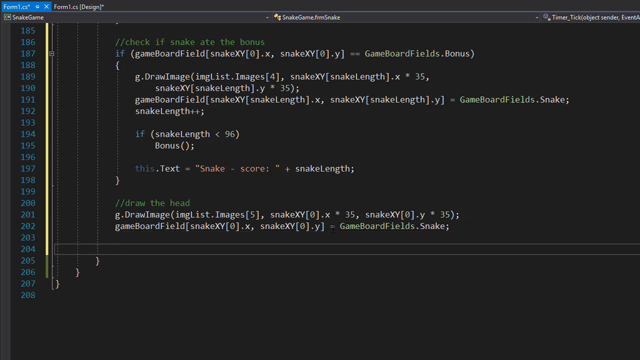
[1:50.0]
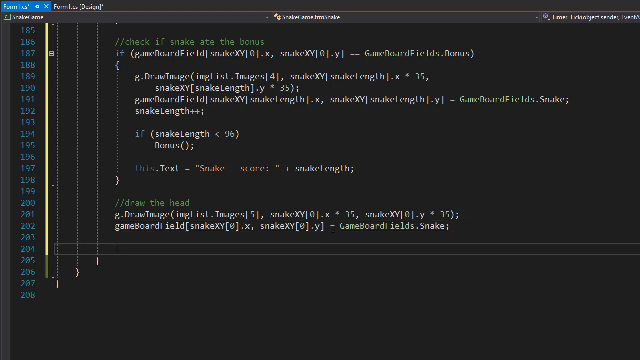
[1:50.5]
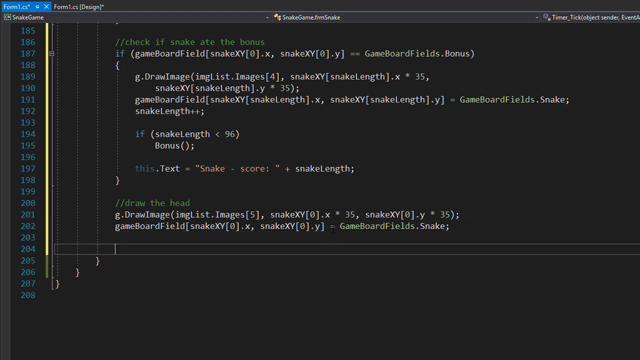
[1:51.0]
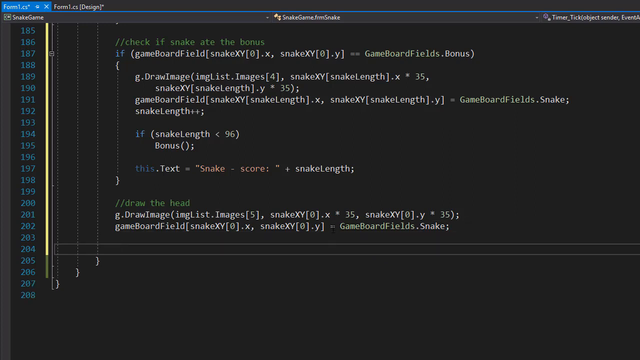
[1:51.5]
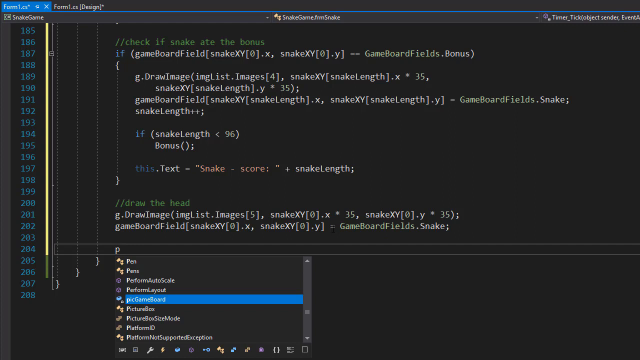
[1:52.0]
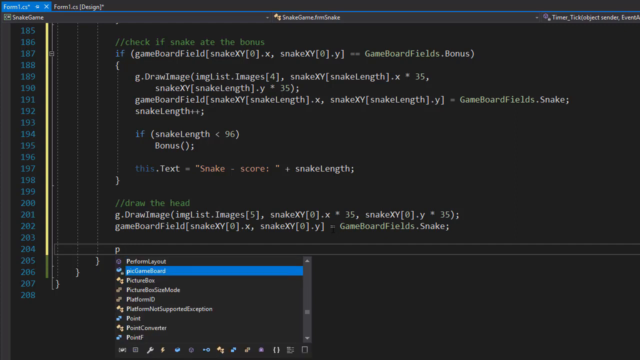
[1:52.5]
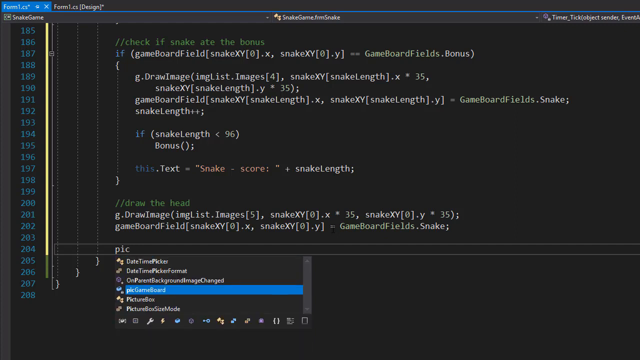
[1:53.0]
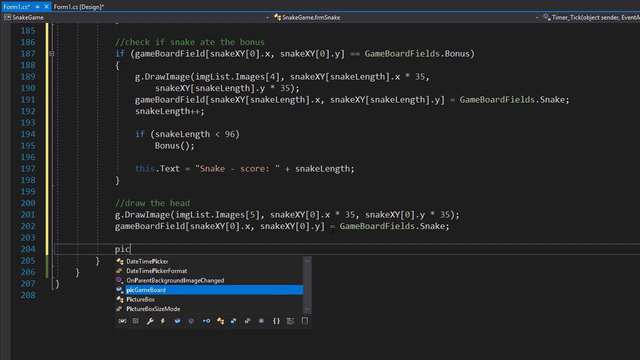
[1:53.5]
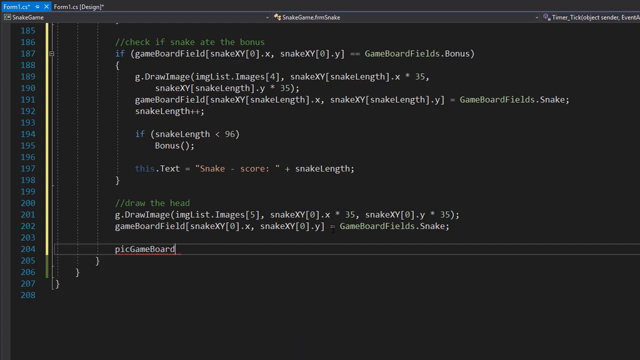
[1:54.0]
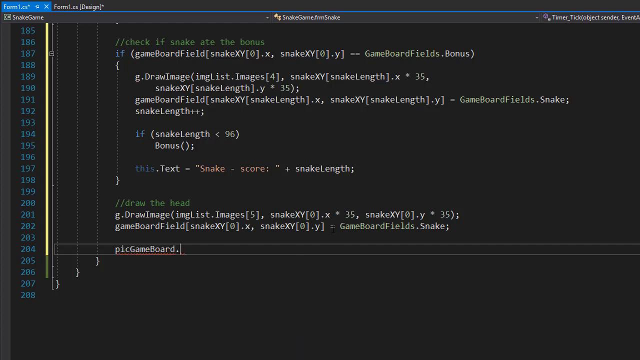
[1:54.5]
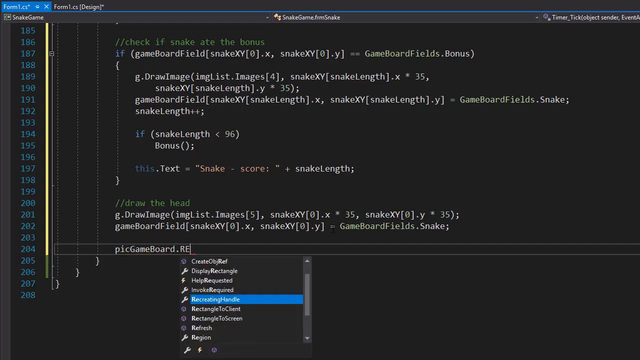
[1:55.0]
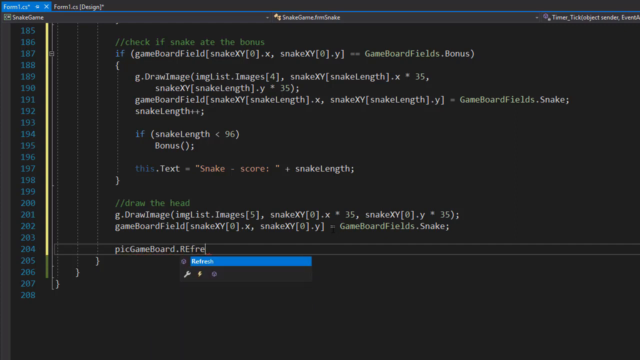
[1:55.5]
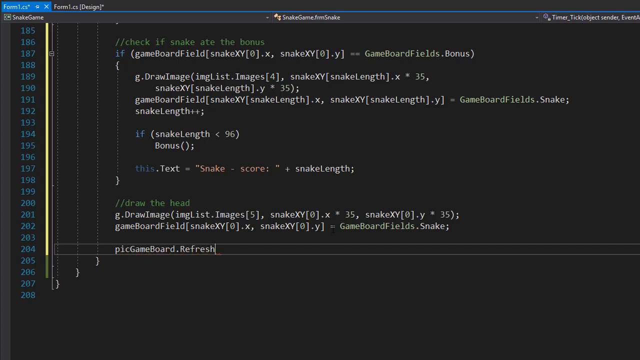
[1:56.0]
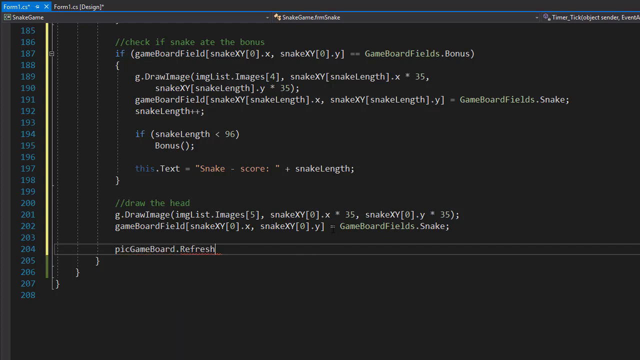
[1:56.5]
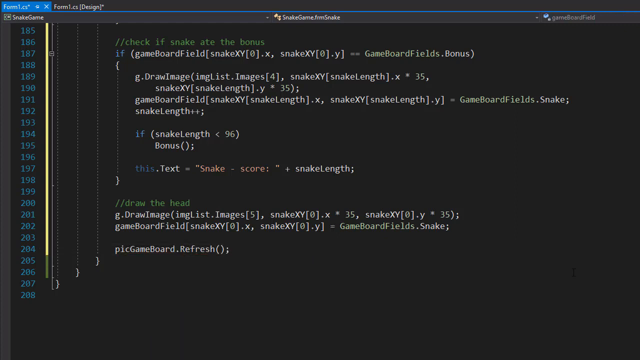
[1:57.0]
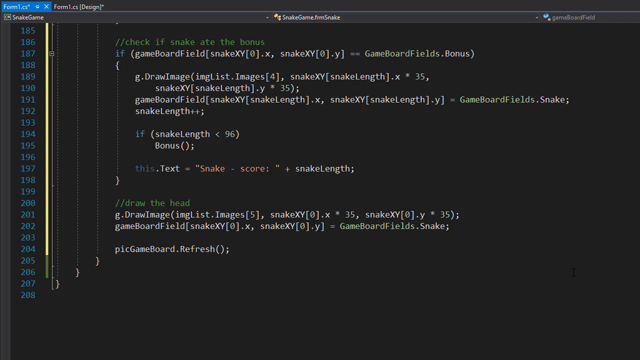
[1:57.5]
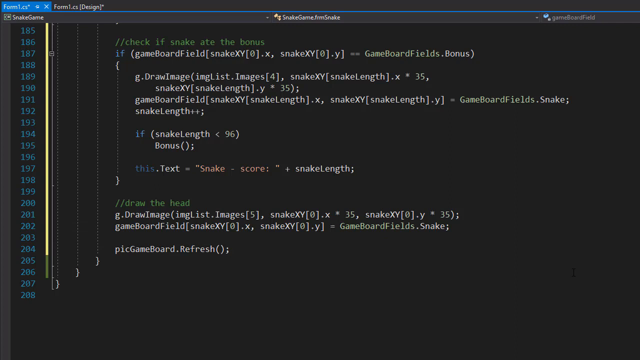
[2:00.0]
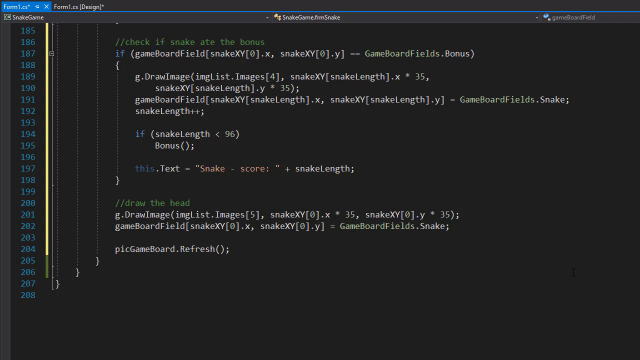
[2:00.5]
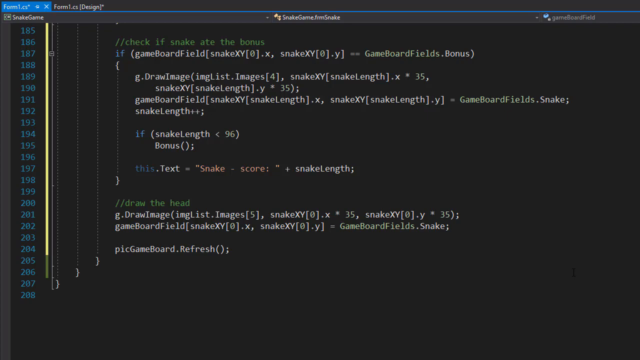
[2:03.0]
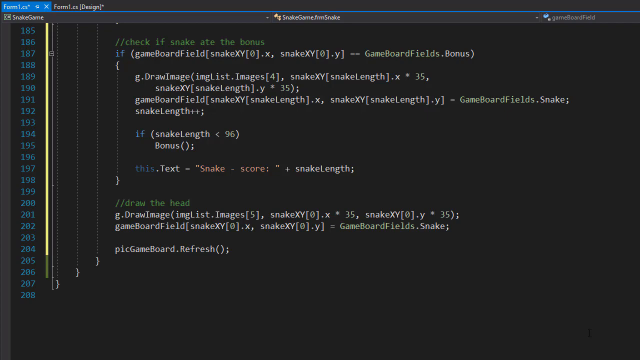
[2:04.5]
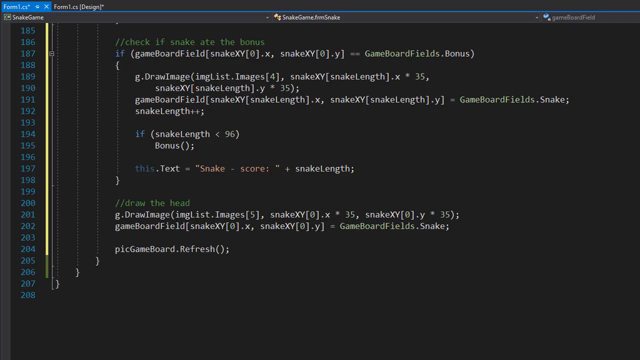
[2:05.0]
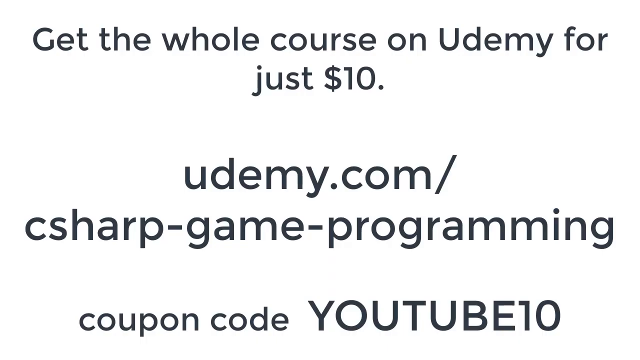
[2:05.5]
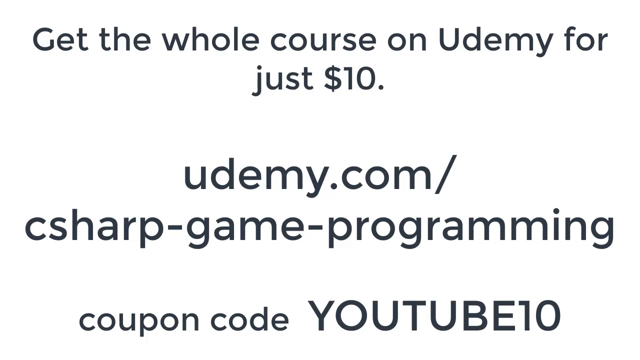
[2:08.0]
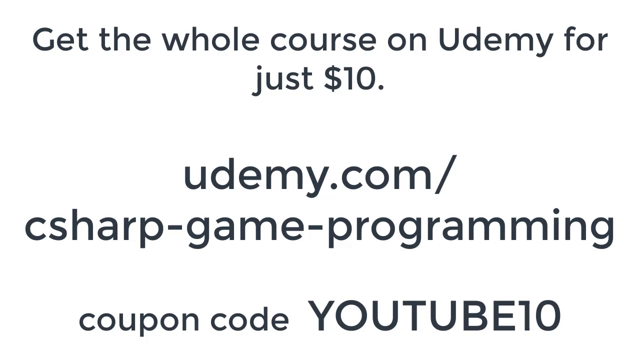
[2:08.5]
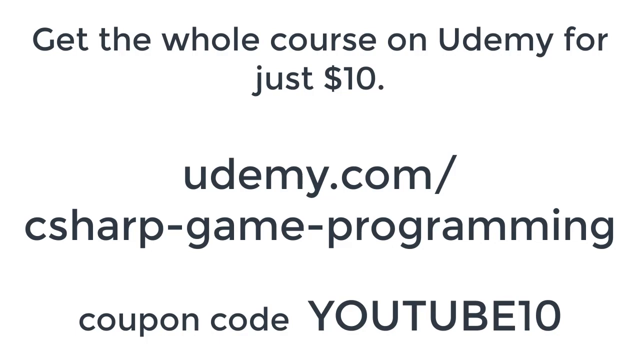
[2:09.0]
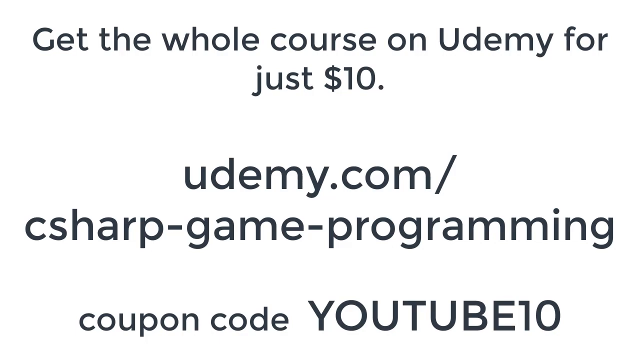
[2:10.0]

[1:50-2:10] On the same compiling screen, the user moves down to line 204 and types another line of code in white, left to right: "pick game board.refresh" followed by open and closed parentheses and a semicolon. There is a brief pause on the code. The video then quickly switches to a white screen with black text at the top reading "Get the whole course on the Udemy for just $10." Beneath it is "udemy.com/c-sharp game programming," and beneath that "coupon code YouTube10." All the text is black, and the white background fades in a gradient into black at the bottom of the screen as the video ends.